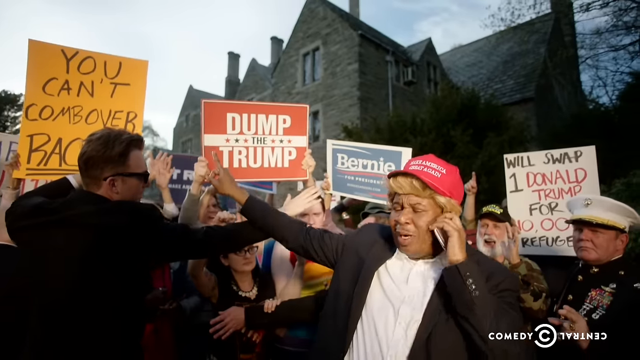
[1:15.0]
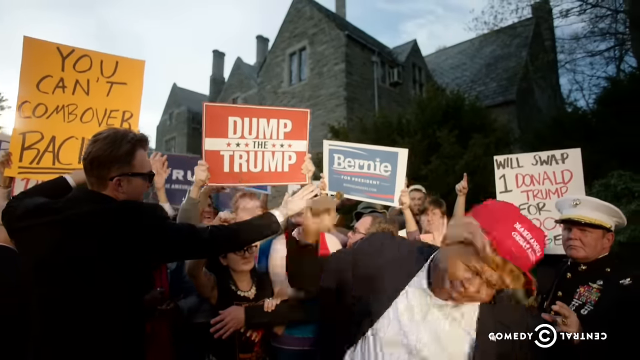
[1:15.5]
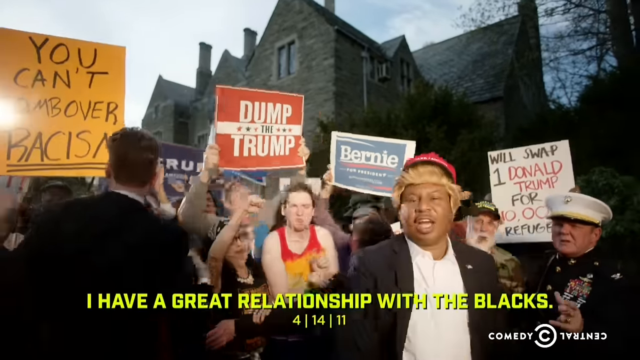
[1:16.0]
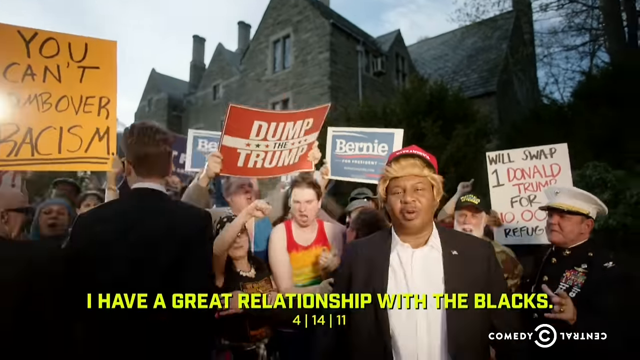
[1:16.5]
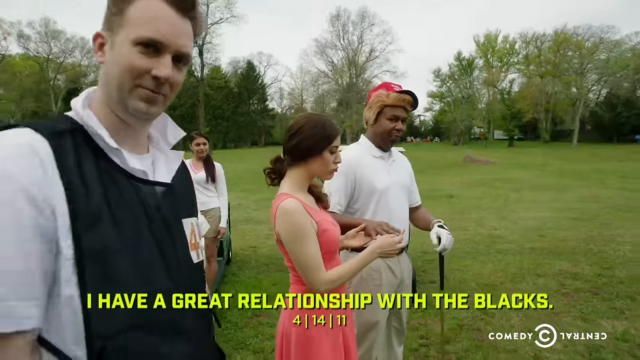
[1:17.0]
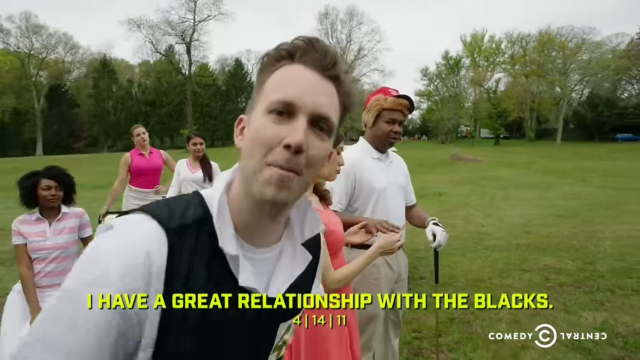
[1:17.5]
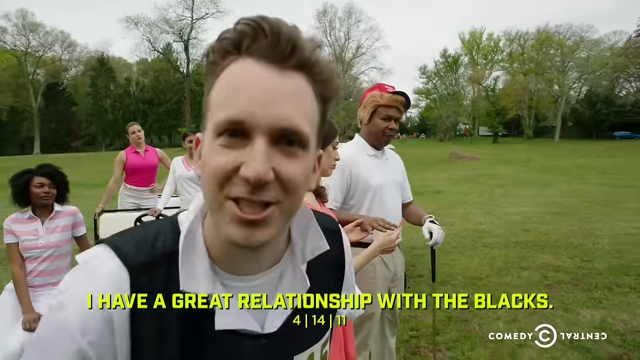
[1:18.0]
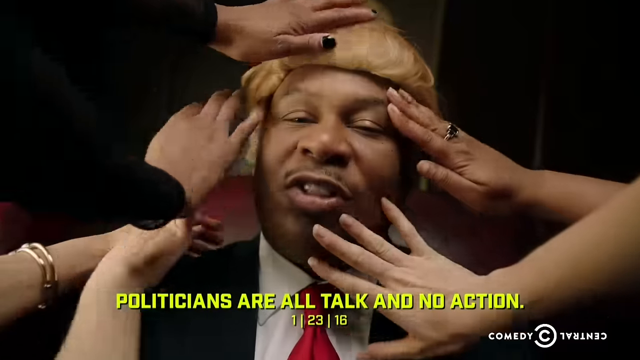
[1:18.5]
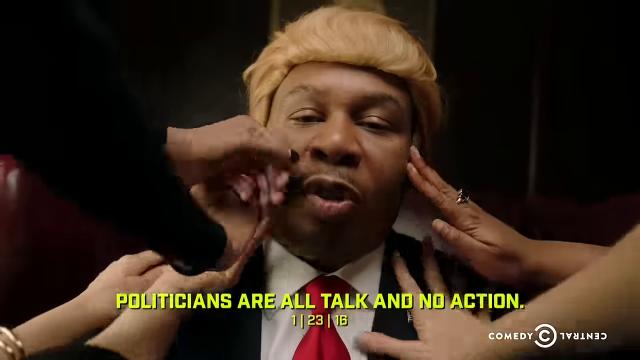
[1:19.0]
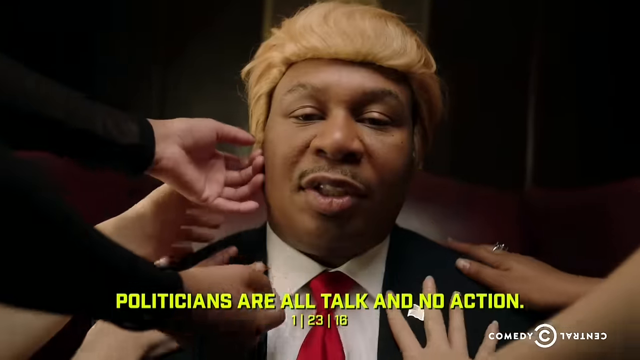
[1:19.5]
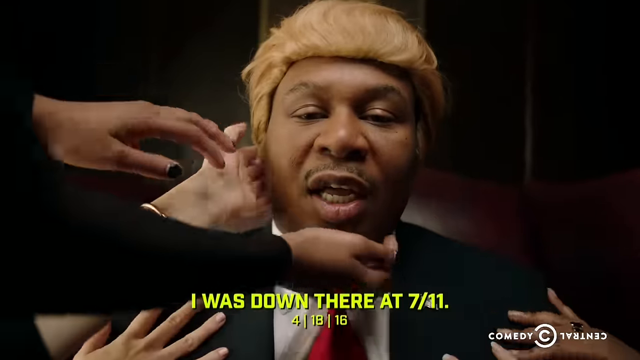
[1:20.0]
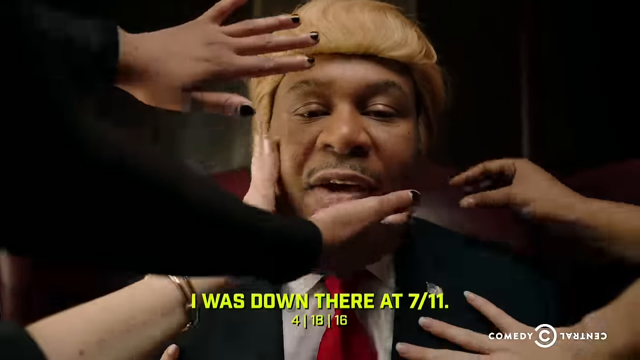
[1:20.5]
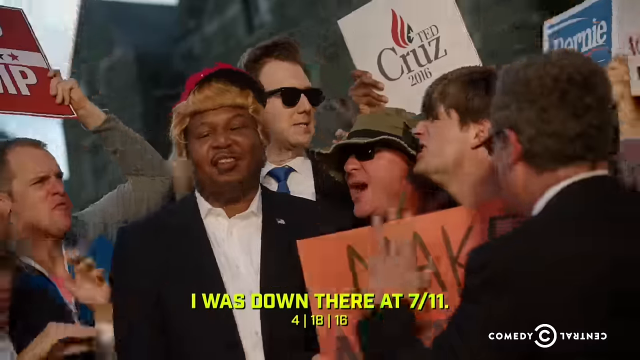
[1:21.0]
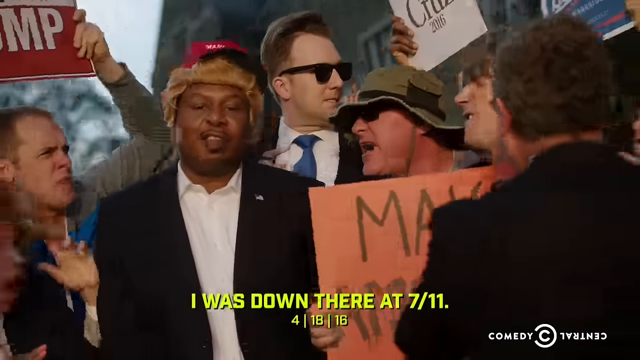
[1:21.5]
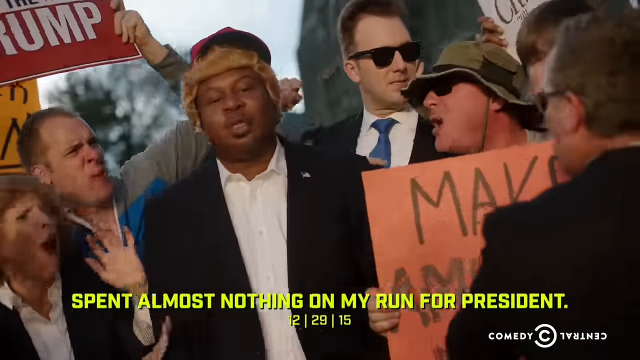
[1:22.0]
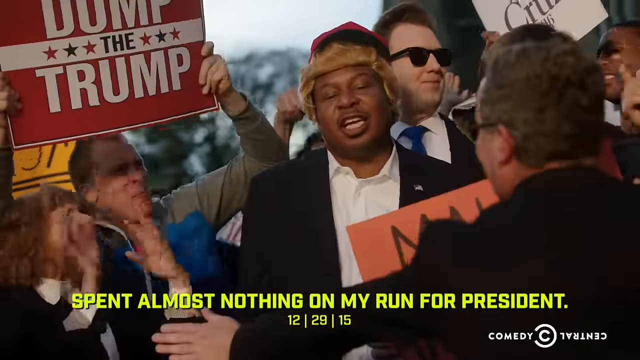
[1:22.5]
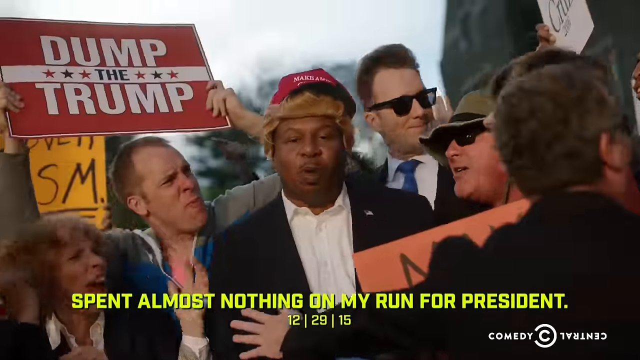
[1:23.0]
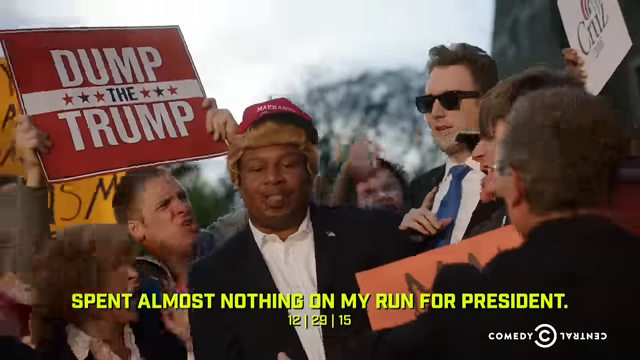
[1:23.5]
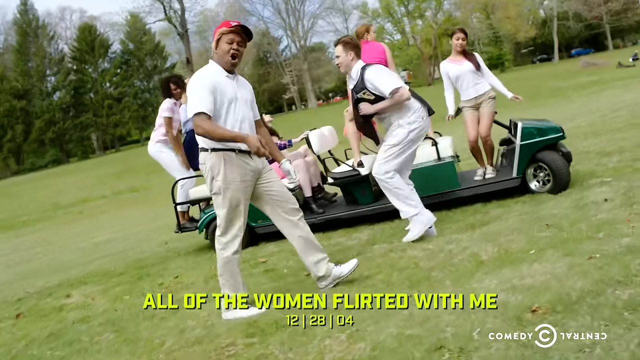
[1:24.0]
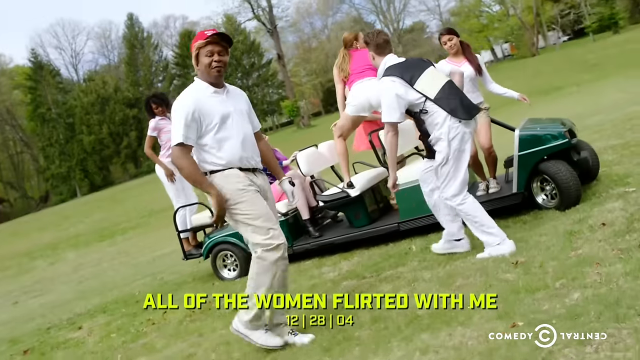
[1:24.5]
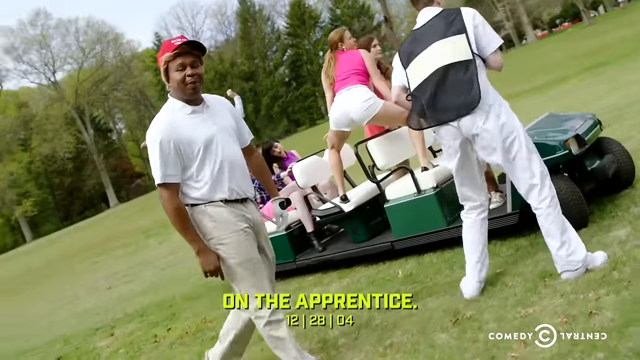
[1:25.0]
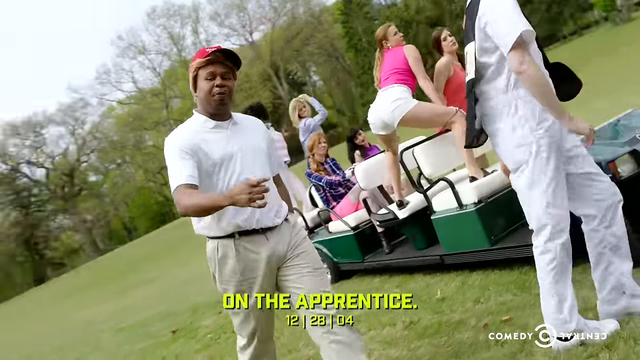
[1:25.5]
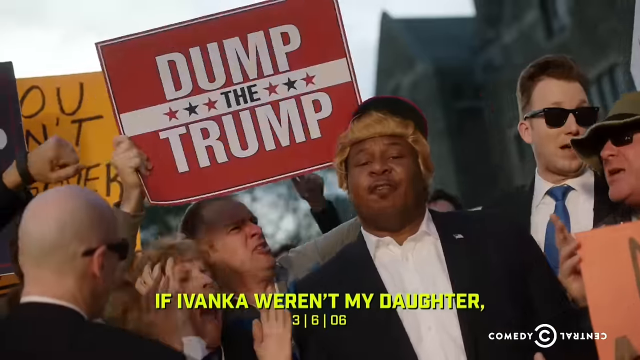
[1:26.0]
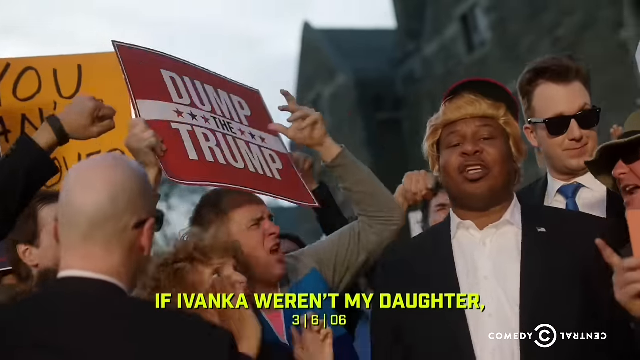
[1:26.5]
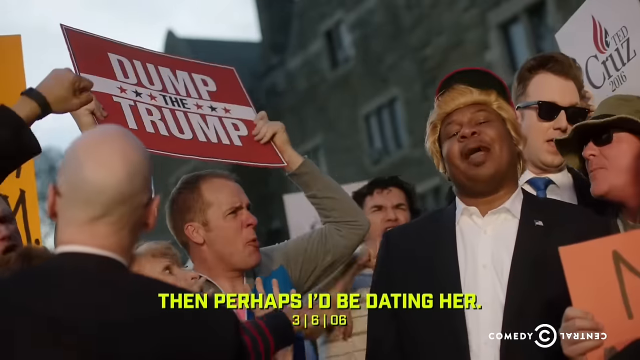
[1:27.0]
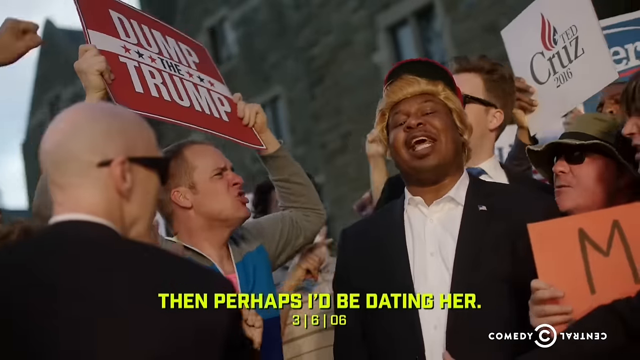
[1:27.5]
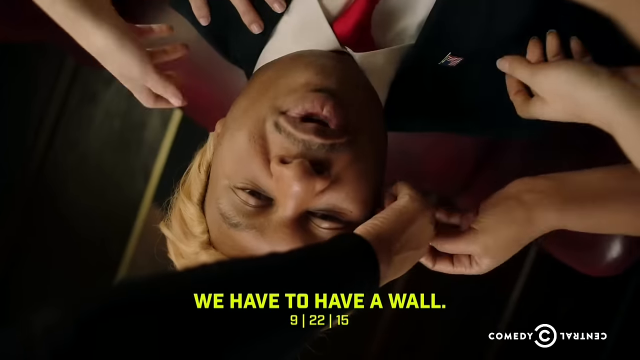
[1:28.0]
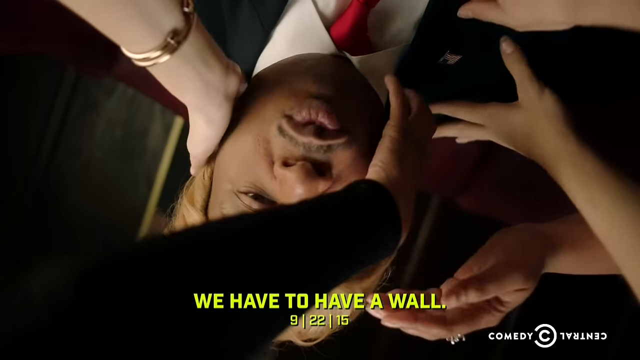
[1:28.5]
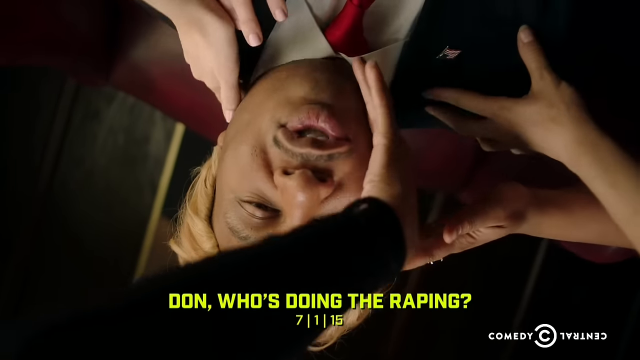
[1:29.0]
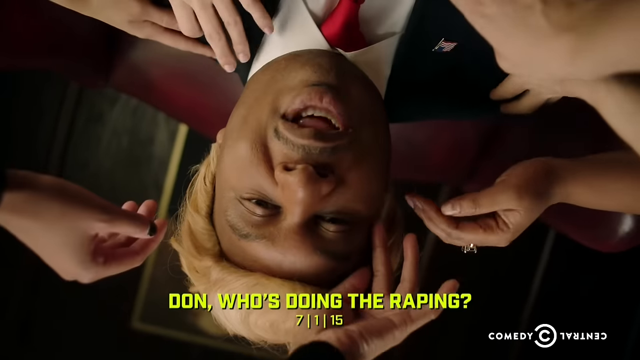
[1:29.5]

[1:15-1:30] Donald Trump is excited with the protesters who are against him. In a new scene, he appears to be with several women wearing gym or golf attire. He appears to be preparing to swing, holding a golf club with his left arm while sitting down with his wrist on top of the club. In another scene, several hands rub all over Black Donald Trump as he continues to deliver lyrics, which are highlighted in a yellowish-greenish color. The hands caress his face with a back-and-forth motion of their palms. He is then inside the mob of supporters, who shove and push him, scream and yell, and wave their signs all over his face. He appears to continue speaking as the crowd becomes intense and yells at him more.